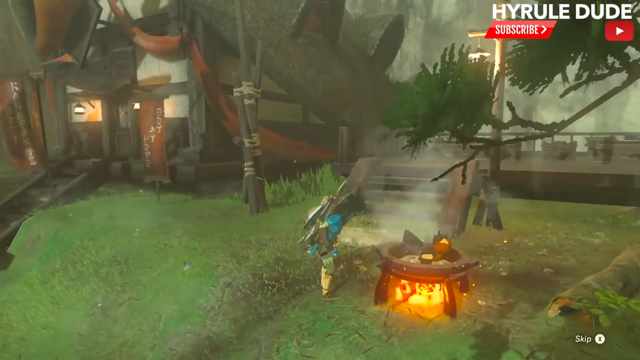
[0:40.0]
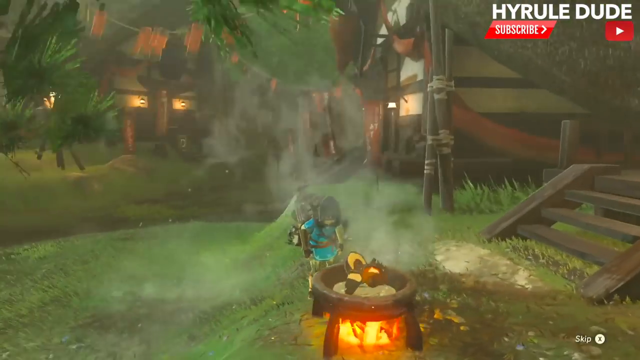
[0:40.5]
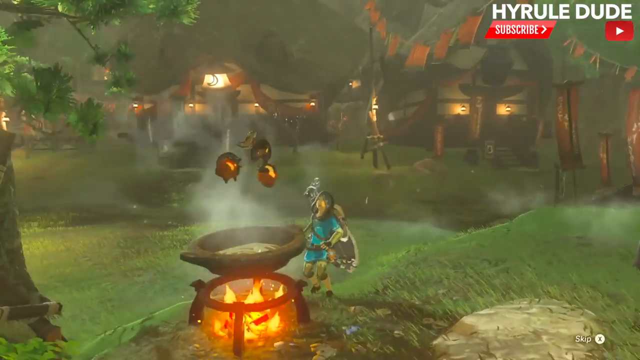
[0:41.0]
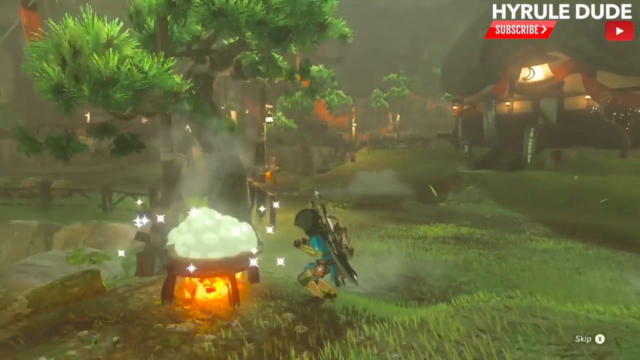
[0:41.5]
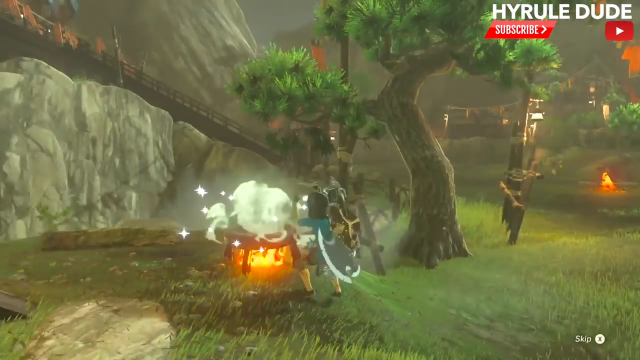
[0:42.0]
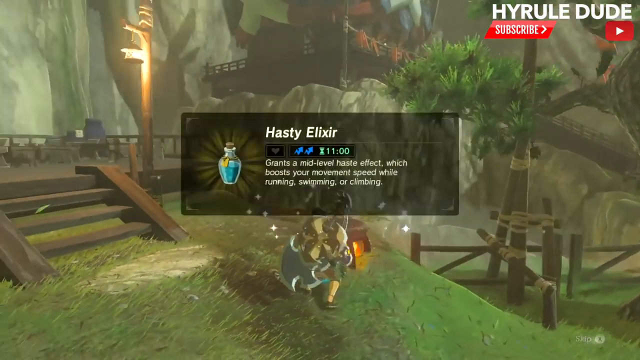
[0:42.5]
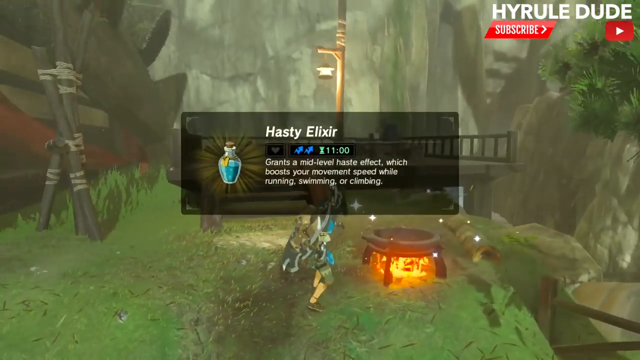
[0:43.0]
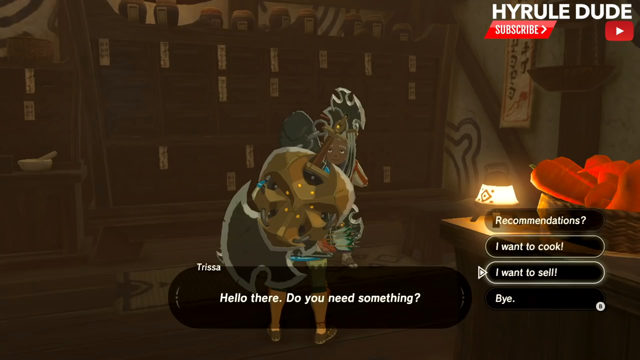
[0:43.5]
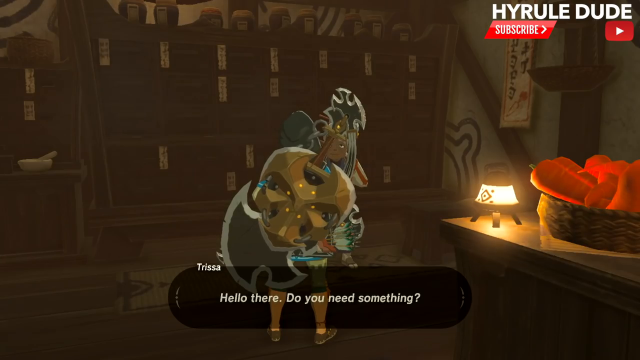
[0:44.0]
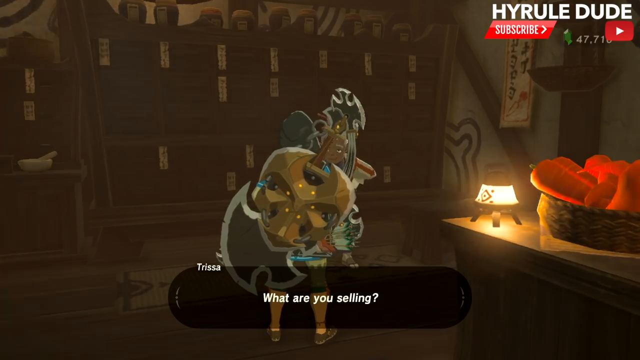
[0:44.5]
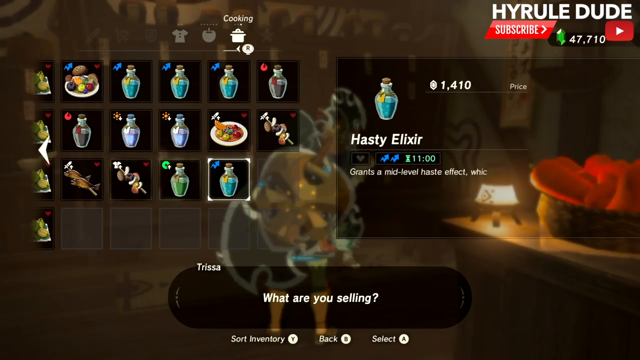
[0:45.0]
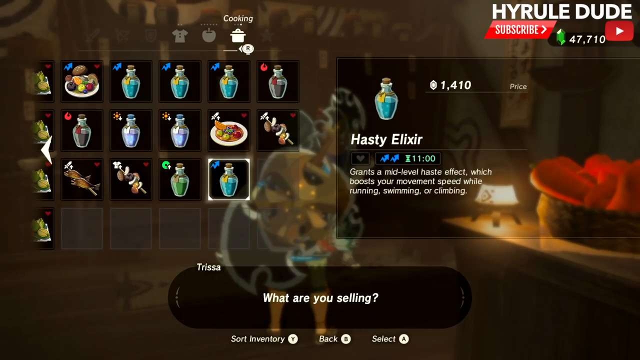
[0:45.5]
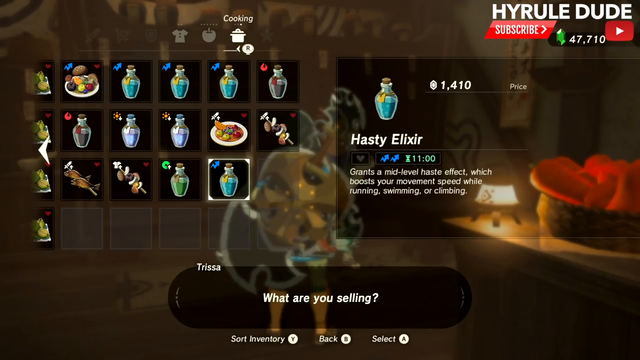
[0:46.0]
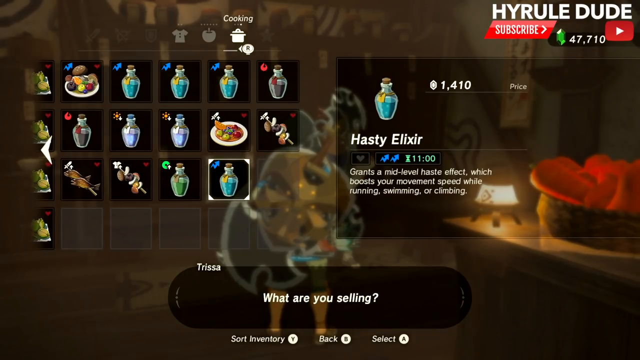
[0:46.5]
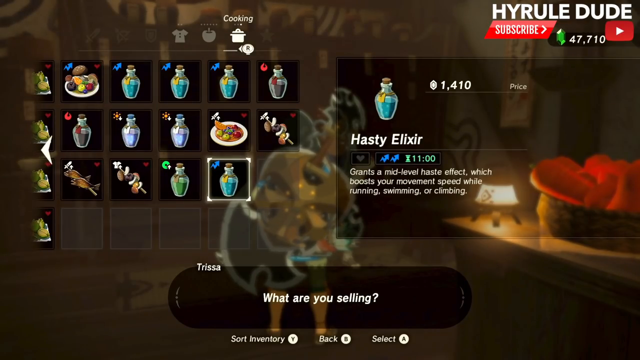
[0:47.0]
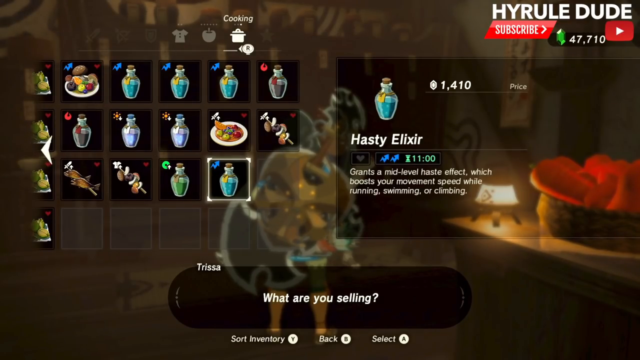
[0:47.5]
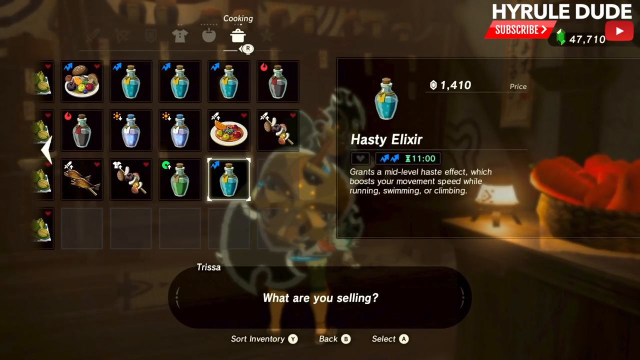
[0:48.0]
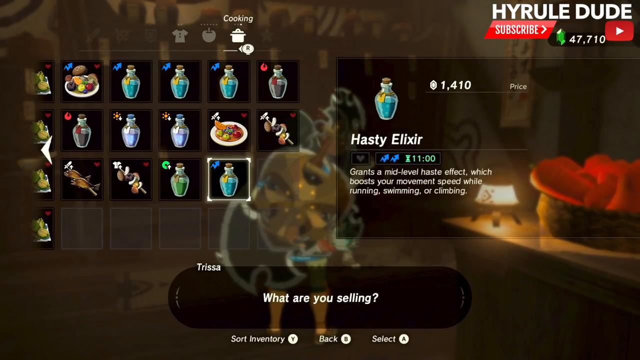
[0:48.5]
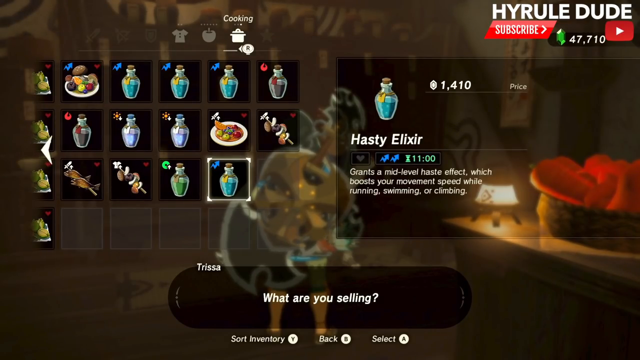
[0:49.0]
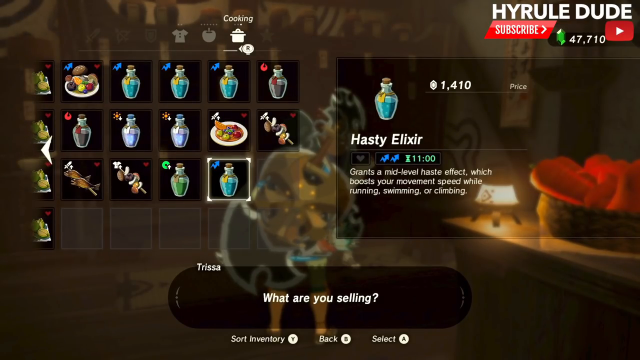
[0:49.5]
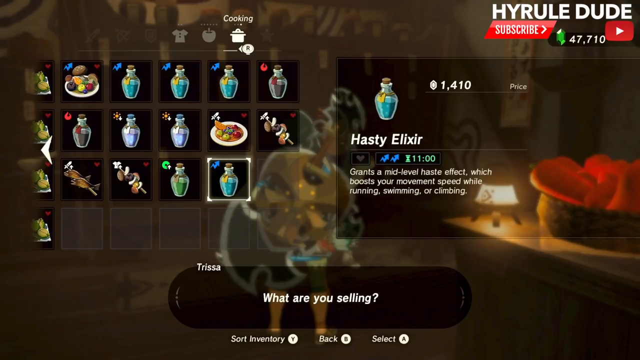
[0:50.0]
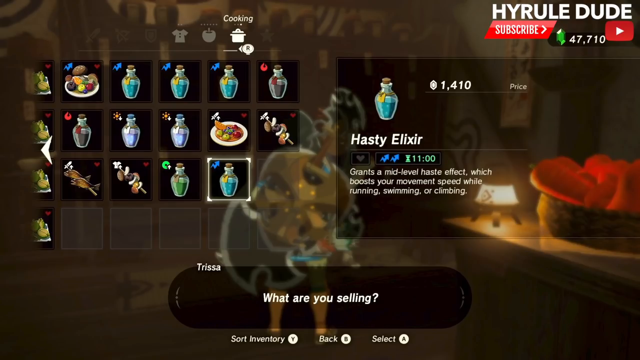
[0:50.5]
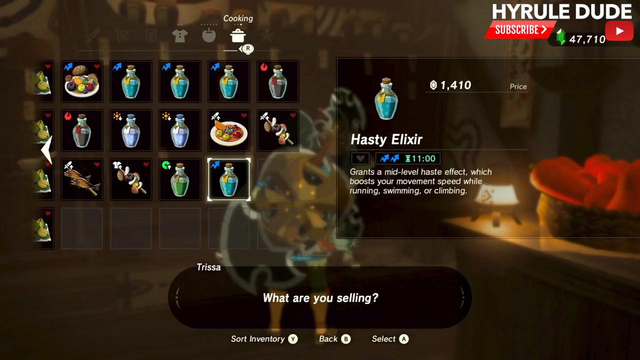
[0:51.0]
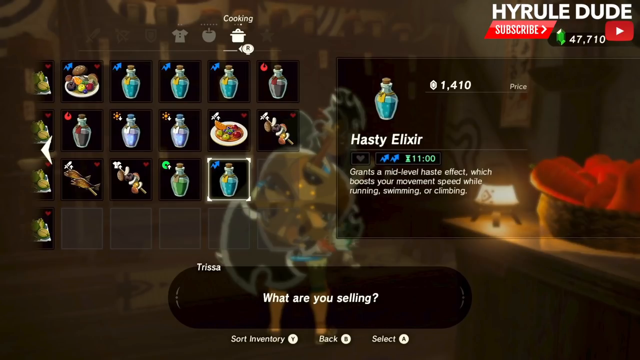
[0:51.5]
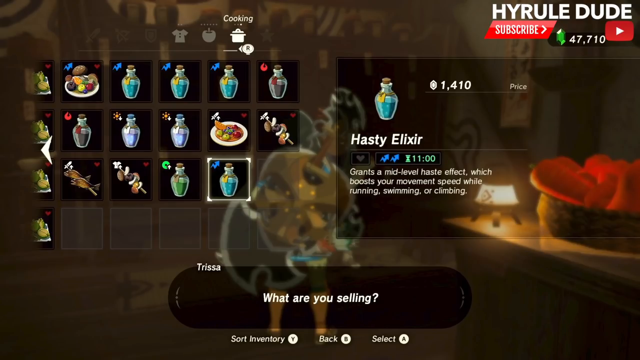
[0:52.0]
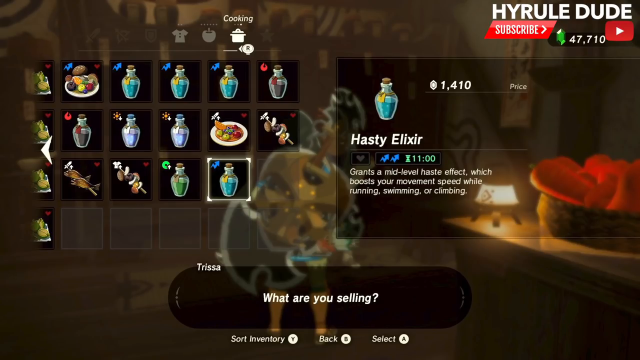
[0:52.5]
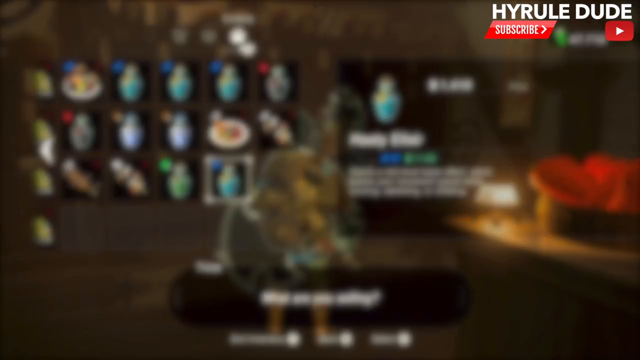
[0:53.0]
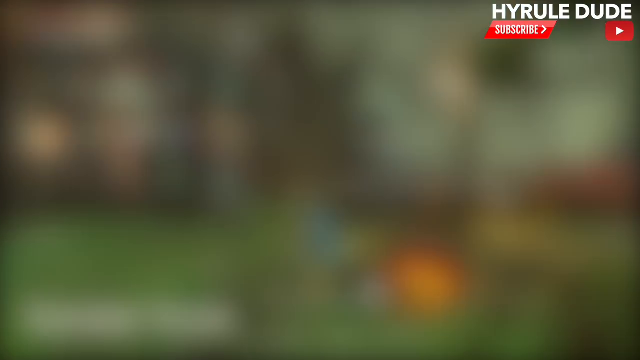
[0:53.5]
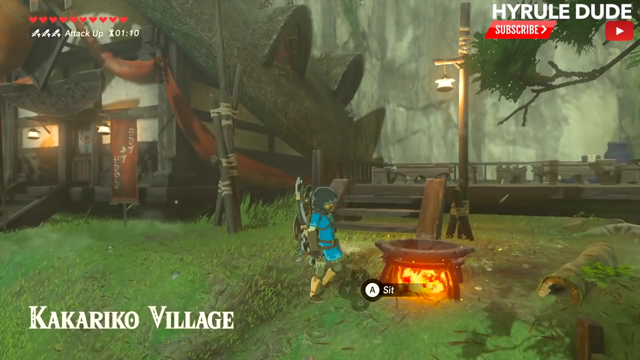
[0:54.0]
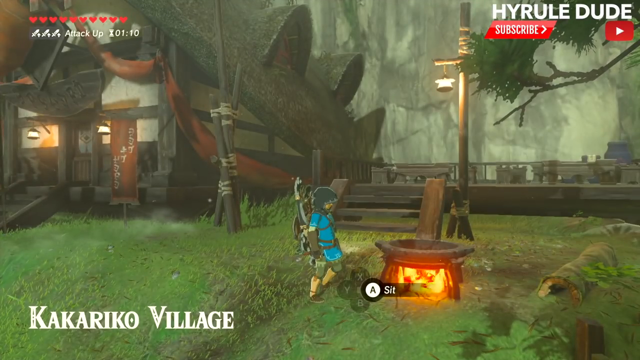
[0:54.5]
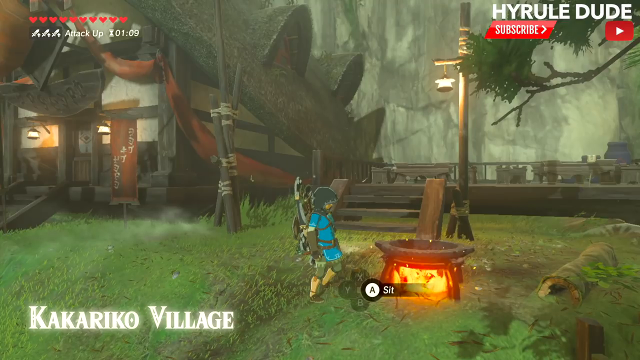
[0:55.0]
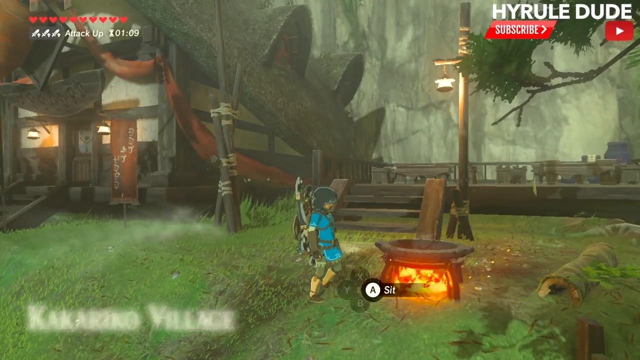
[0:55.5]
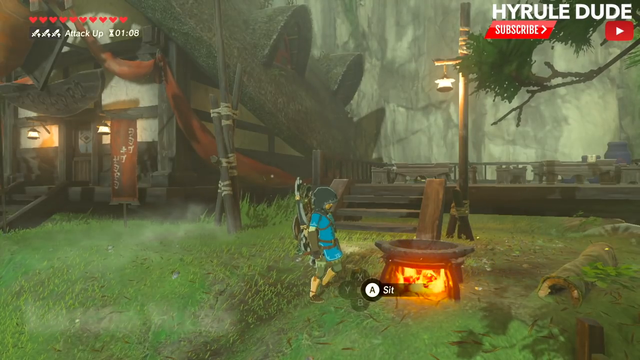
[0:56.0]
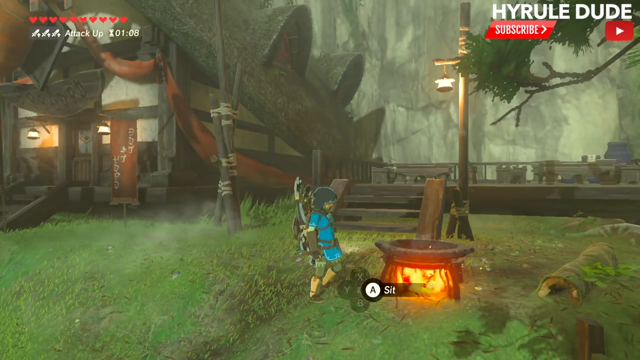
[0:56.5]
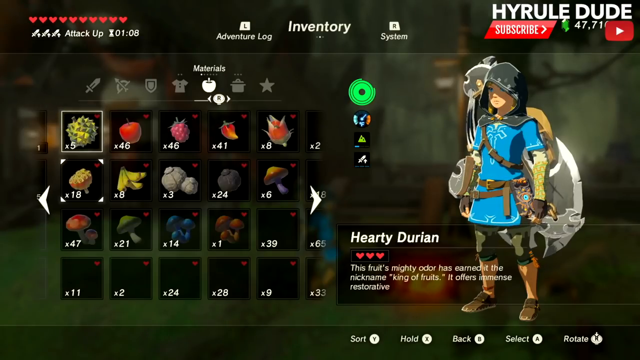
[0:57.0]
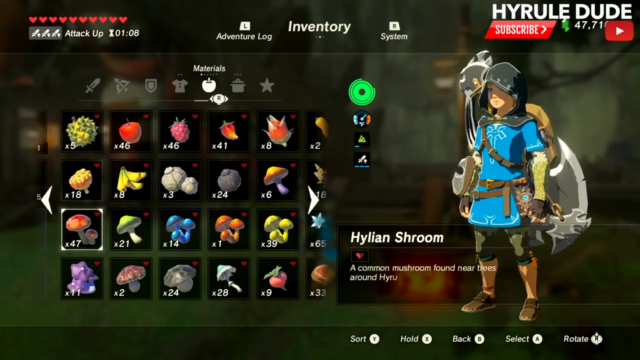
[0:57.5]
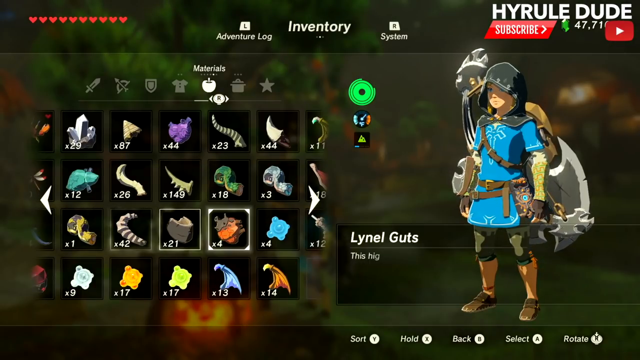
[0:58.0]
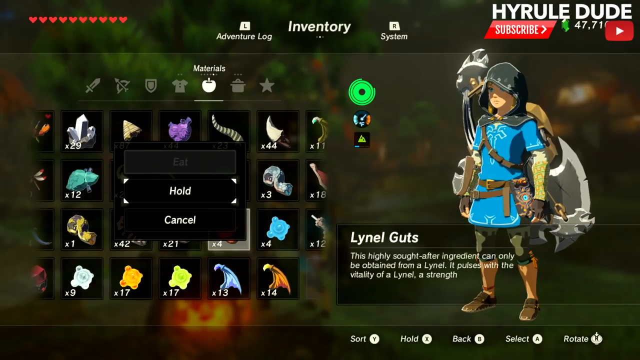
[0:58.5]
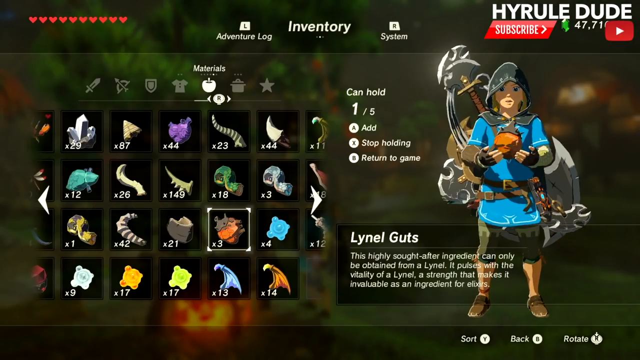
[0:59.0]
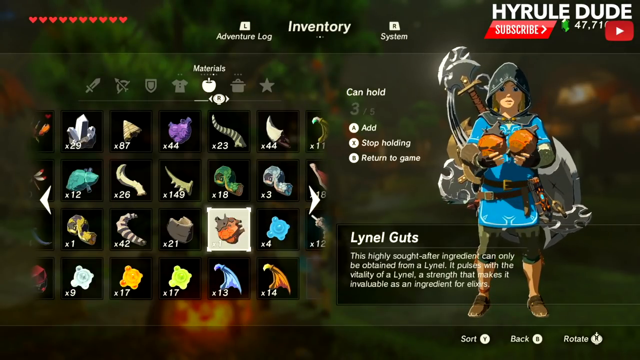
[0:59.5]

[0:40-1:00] A character dressed in a green tunic stands outdoors looking over a pot placed on a fire. He is surrounded by a grassy field, with a large tree with green leaves to his right and a large boulder to his left. The objects in the fire give off puffs and blasts of smoke. The camera pans around the character, and the screen transitions to a matrix of three rows and six columns showing a hasty elixir, a small bottle filled with green liquid and covered with a cork. White text in the upper right corner of the screen reads "Hyrule Dude," and the lower left corner reads "Kakariko Village." The character in the blue tunic continues to look over the pan on the fire. Behind him, to the left, is a house with a thatched roof. The wind blows, rustling the grass and moving the tree limbs.